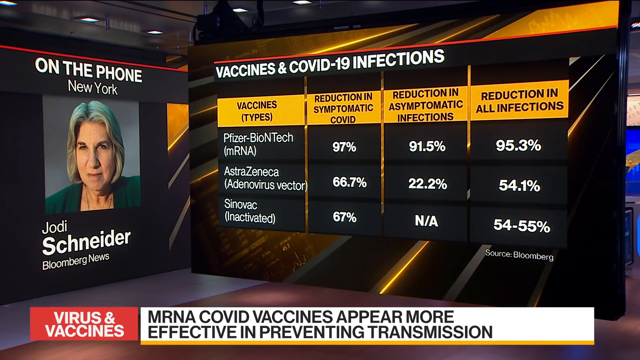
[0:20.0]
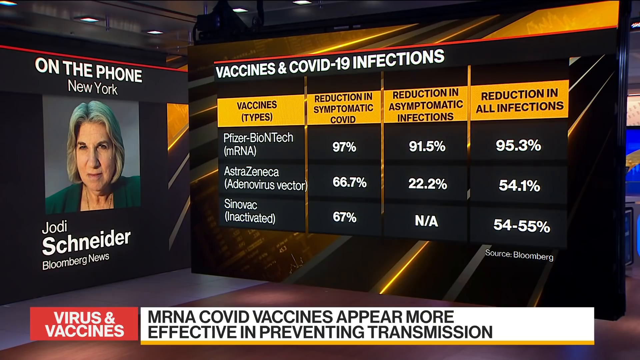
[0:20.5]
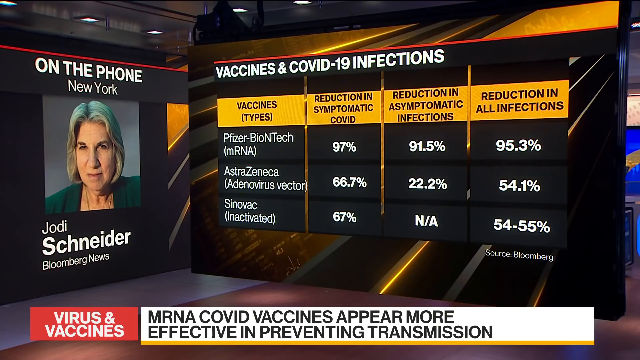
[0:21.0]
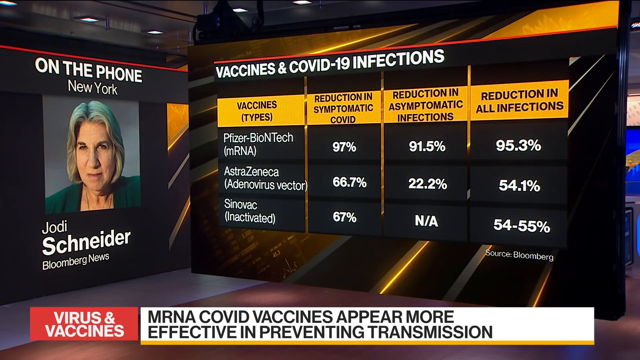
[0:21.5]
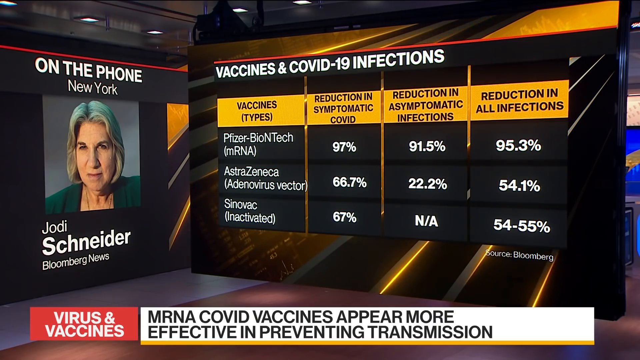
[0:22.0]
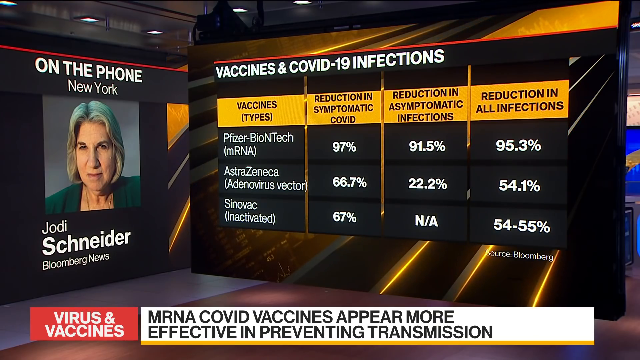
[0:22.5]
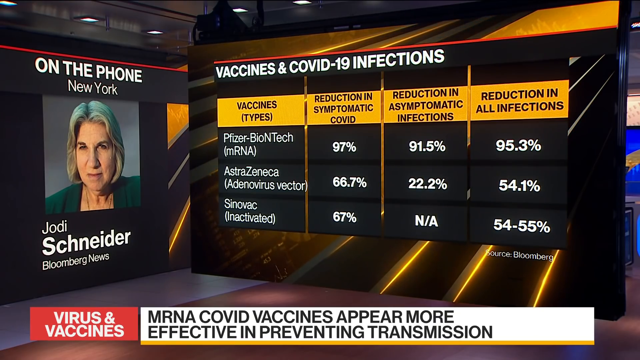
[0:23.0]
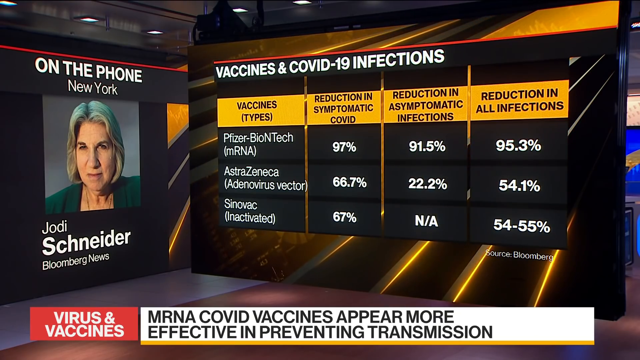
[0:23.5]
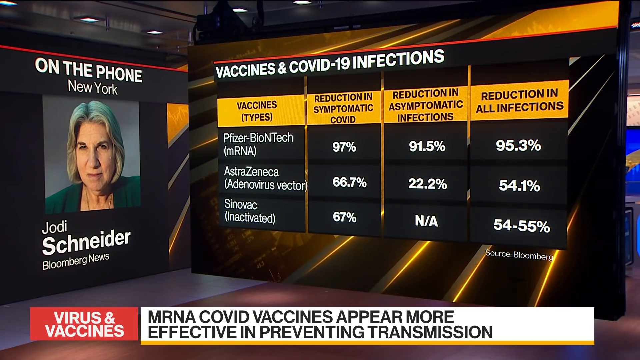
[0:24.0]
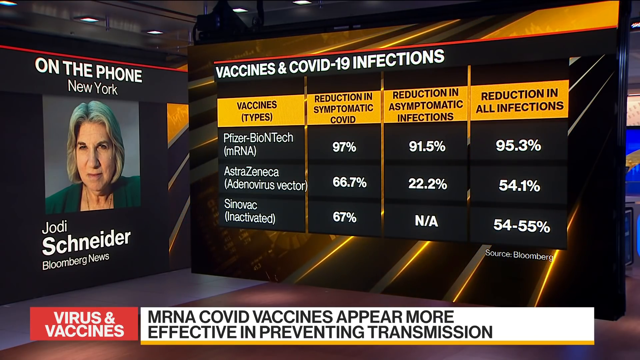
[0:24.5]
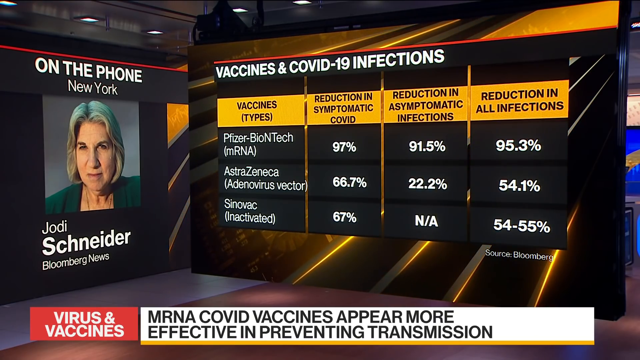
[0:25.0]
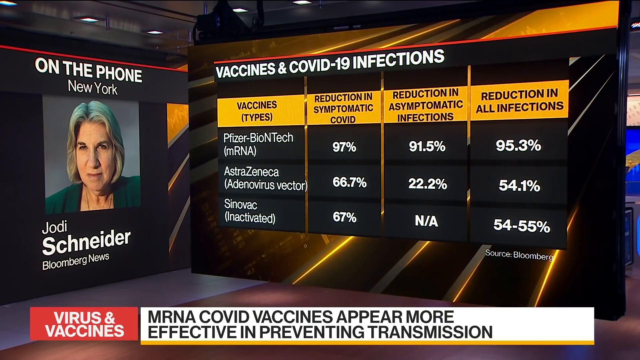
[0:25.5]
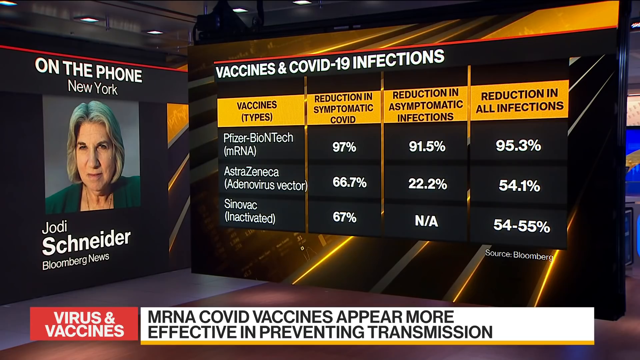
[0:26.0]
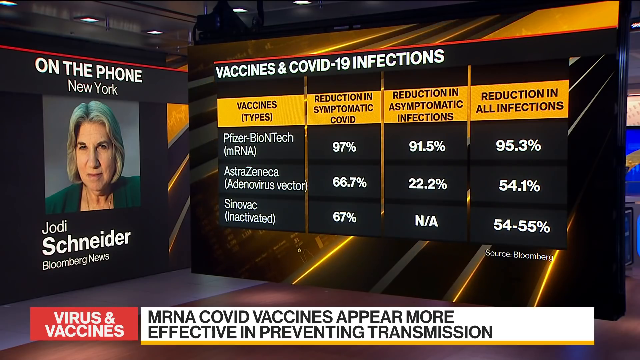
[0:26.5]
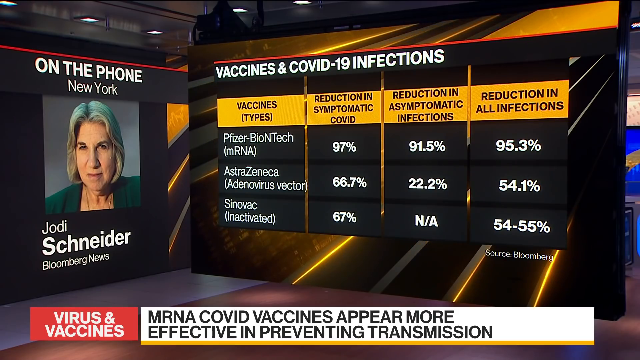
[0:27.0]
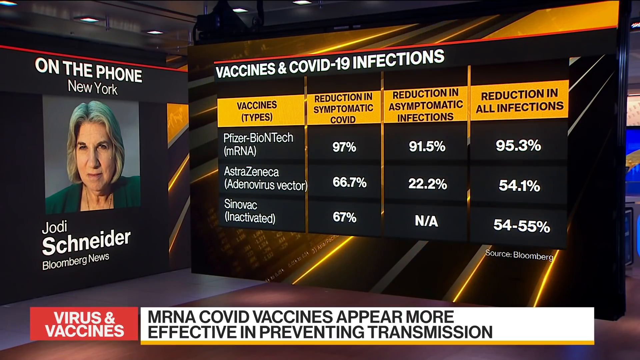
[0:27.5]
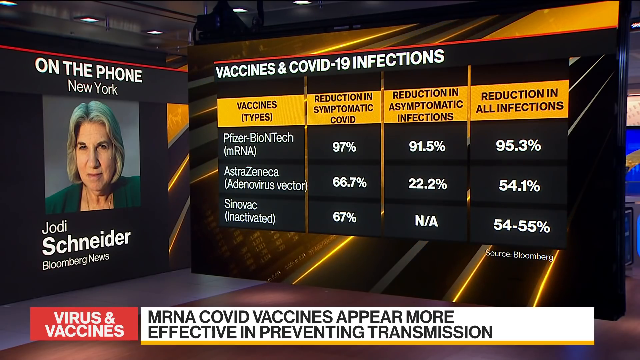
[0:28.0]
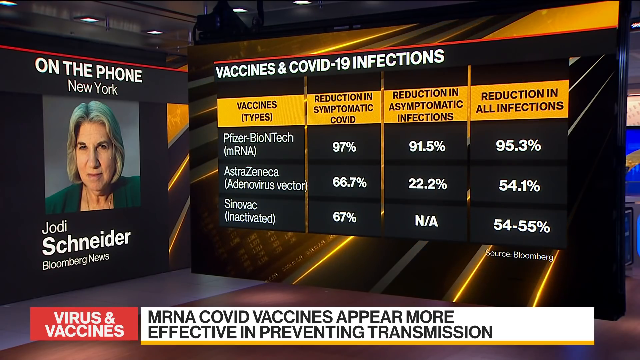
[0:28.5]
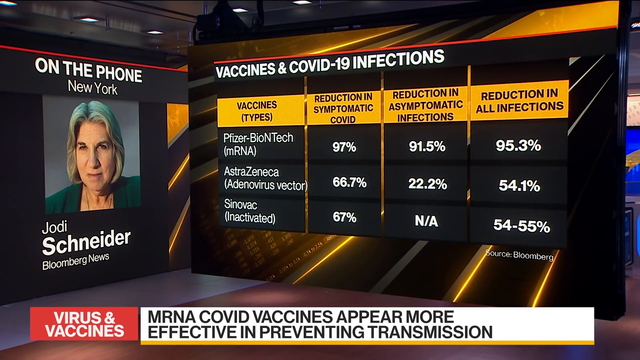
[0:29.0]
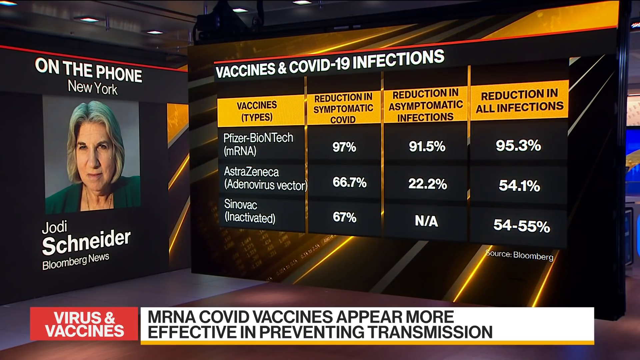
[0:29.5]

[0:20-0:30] On the news channel, Jody from Bloomberg News in New York is still on the phone. A big screen in the newsroom displays the vaccine figures: Pfizer is 97% effective in reducing symptomatic COVID, 91.5% against asymptomatic infections, and 95.3% in reducing all infections. Astra is only 54.1% effective overall, and Sinovac only 54% to 55%, with Bloomberg News given as the source. The main topic is mRNA COVID vaccines appearing more effective in preventing transmission.